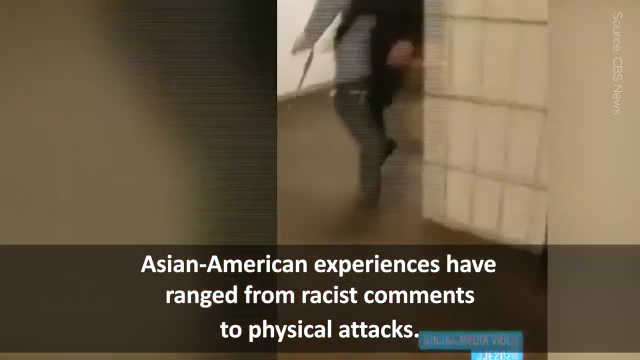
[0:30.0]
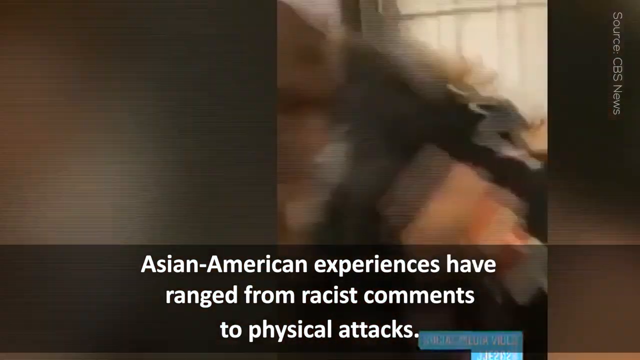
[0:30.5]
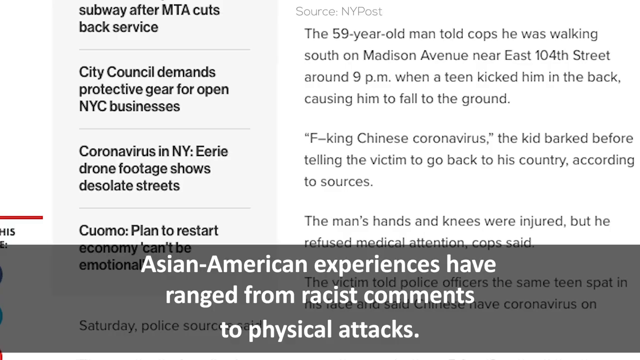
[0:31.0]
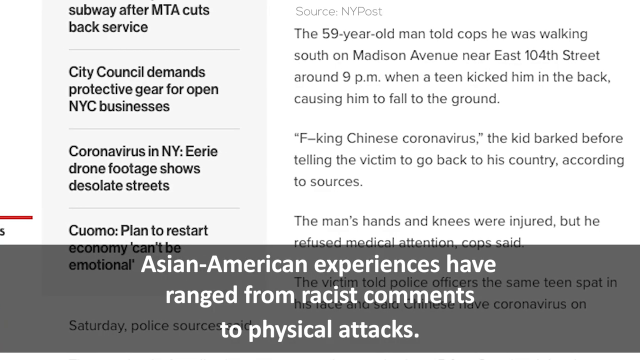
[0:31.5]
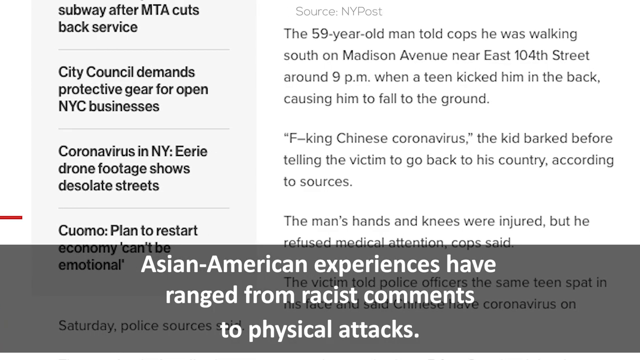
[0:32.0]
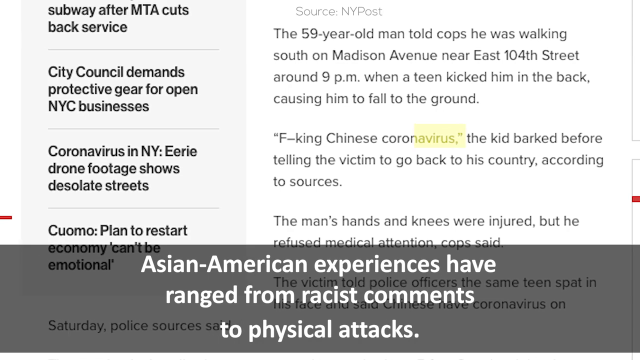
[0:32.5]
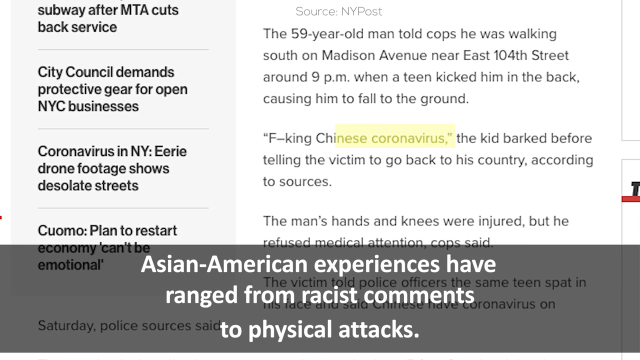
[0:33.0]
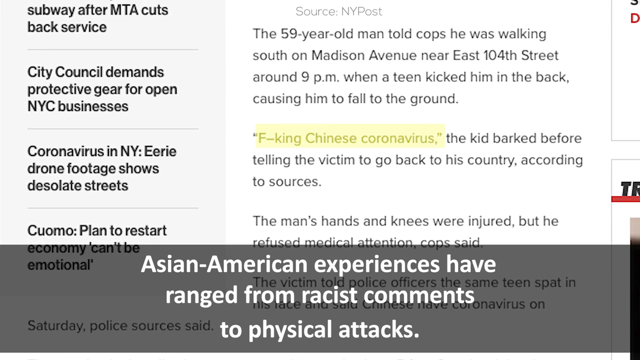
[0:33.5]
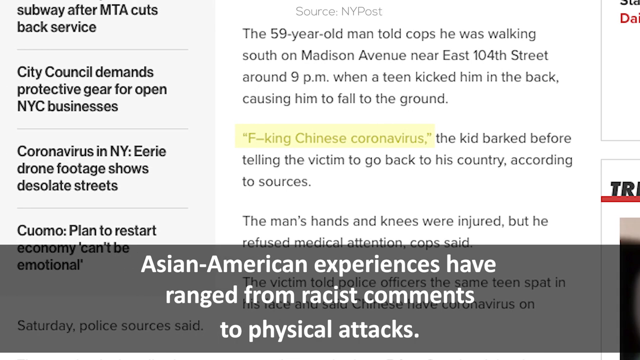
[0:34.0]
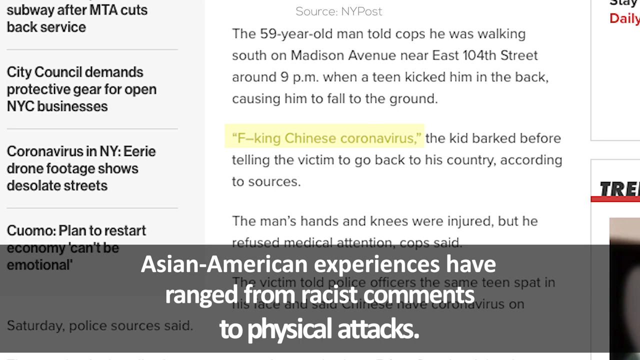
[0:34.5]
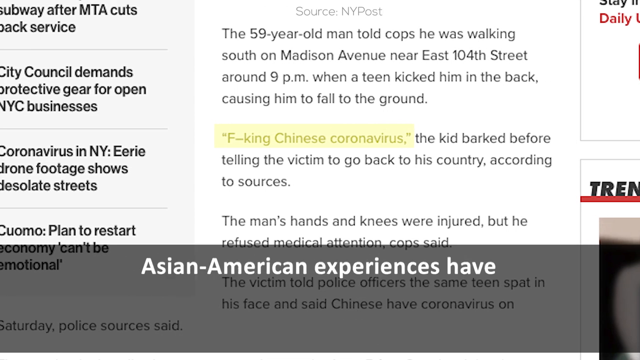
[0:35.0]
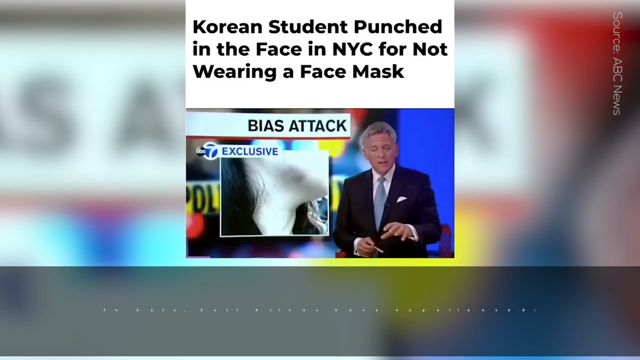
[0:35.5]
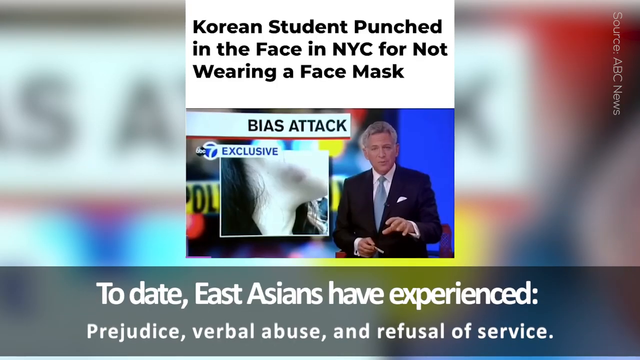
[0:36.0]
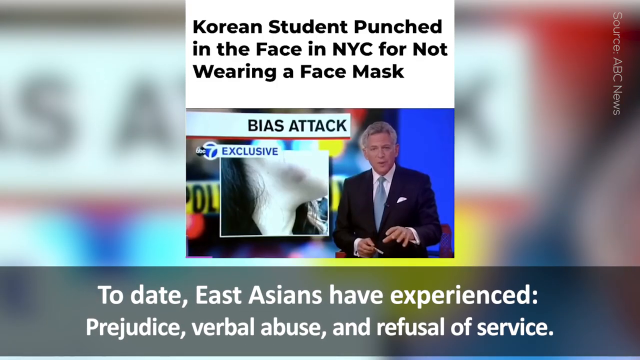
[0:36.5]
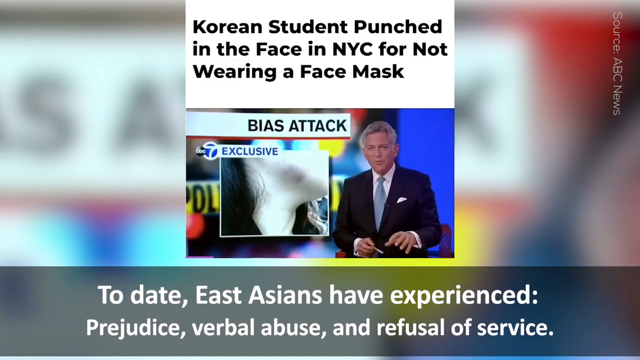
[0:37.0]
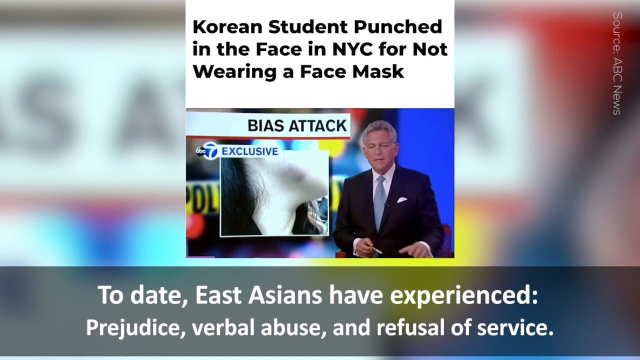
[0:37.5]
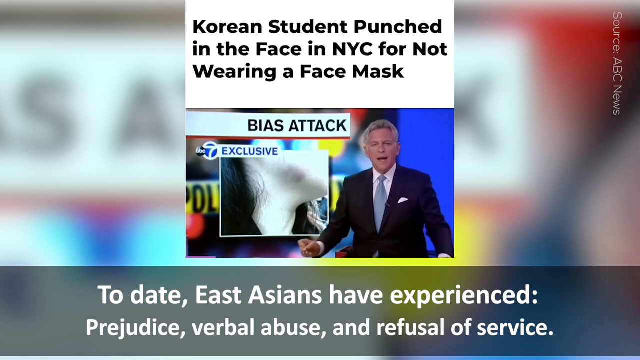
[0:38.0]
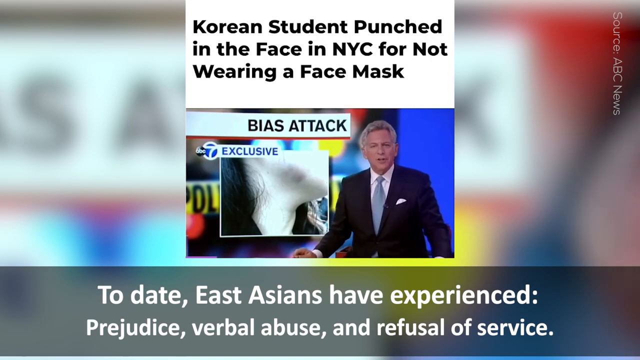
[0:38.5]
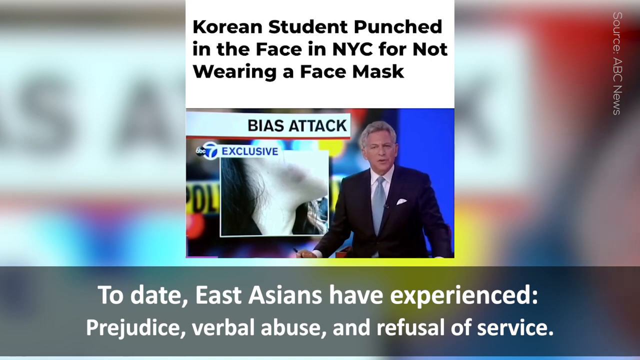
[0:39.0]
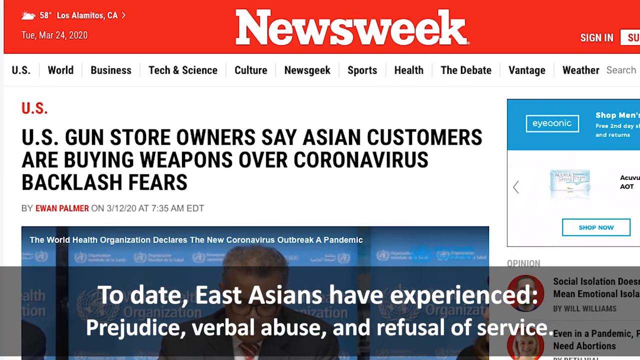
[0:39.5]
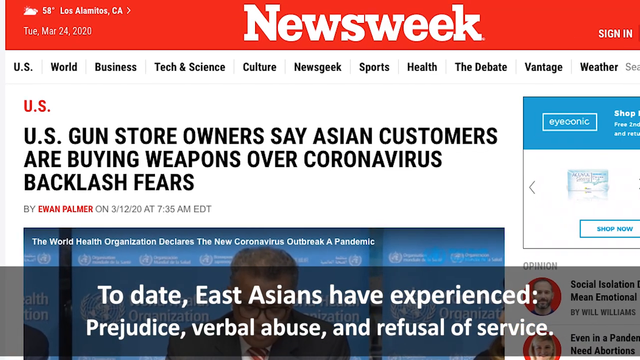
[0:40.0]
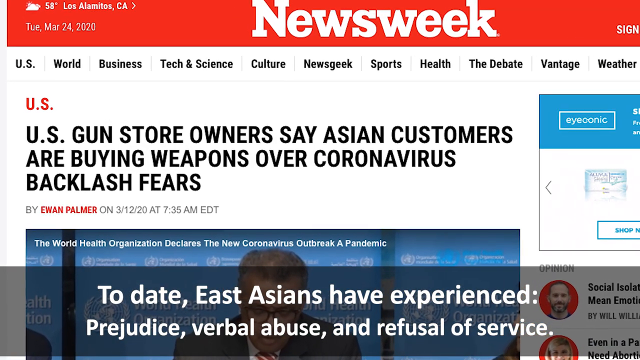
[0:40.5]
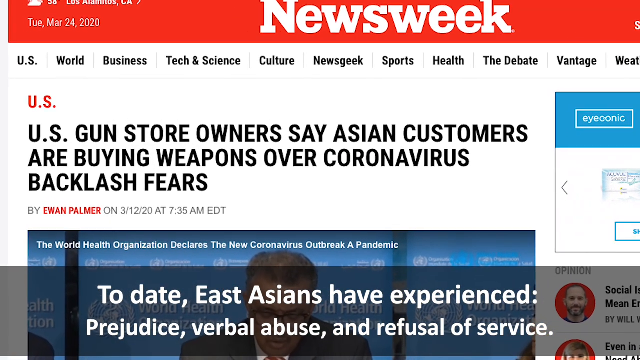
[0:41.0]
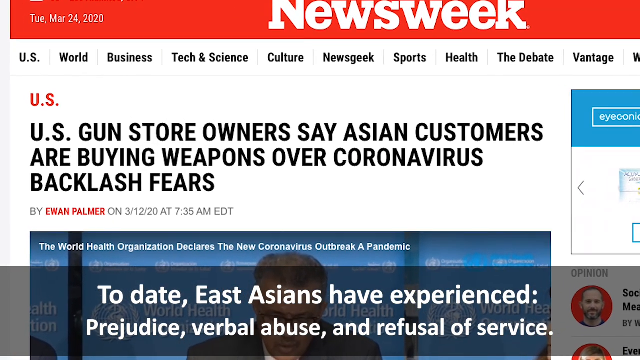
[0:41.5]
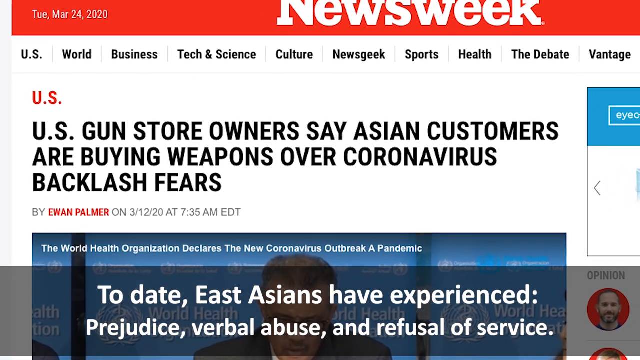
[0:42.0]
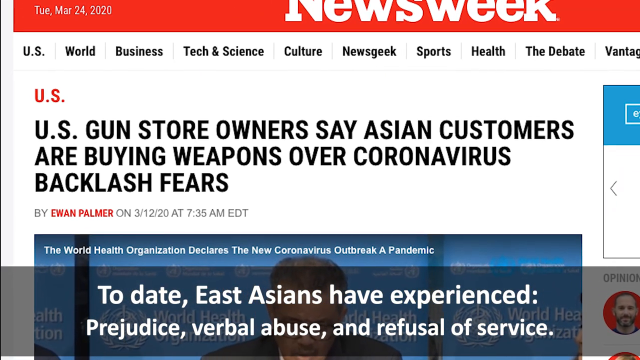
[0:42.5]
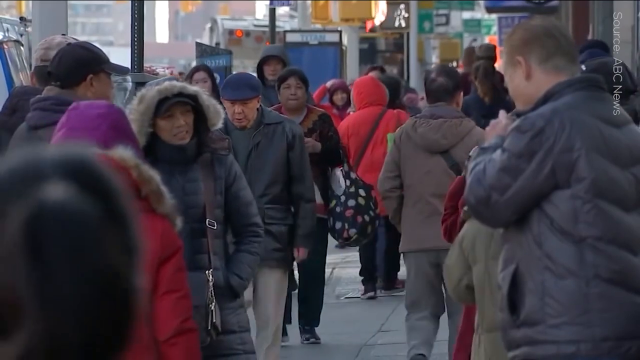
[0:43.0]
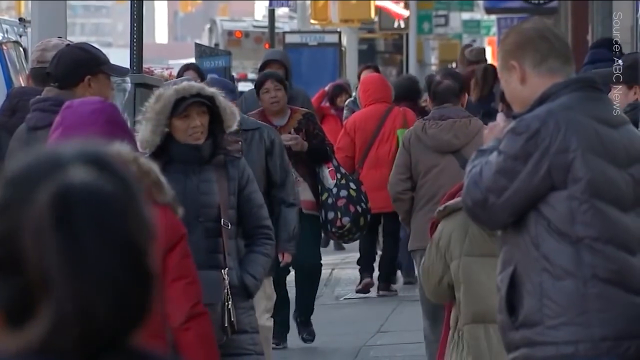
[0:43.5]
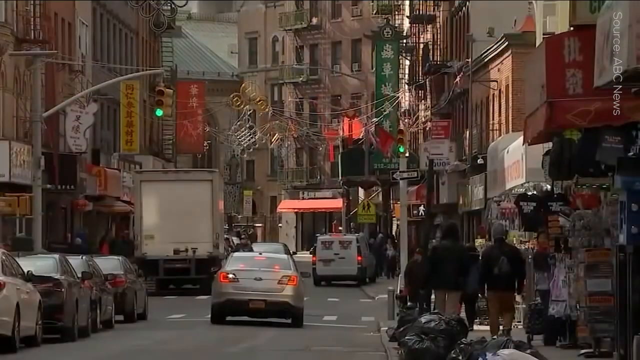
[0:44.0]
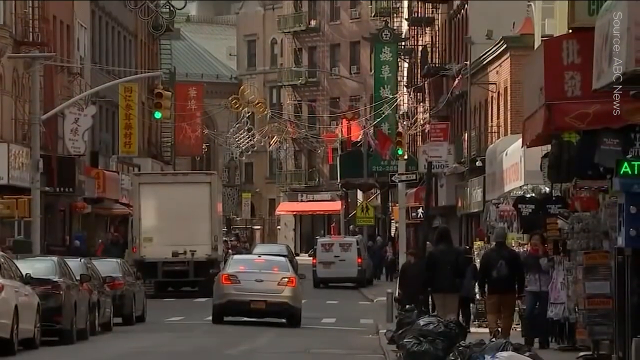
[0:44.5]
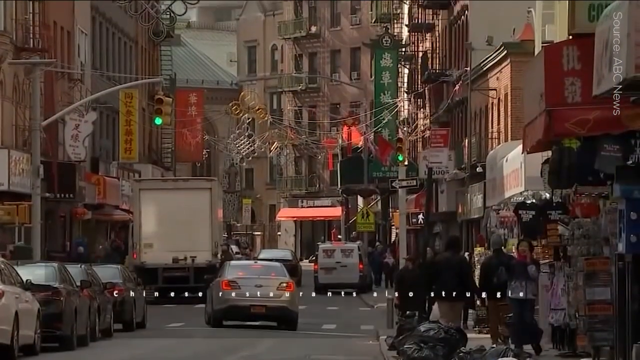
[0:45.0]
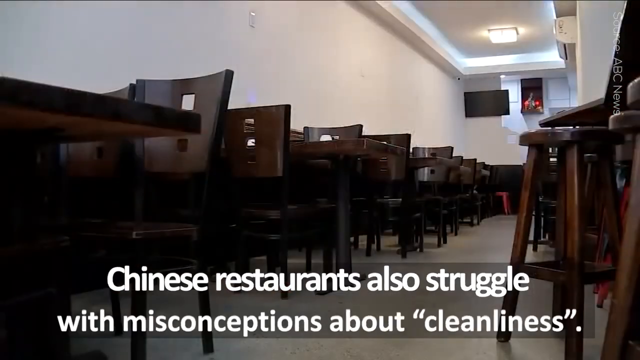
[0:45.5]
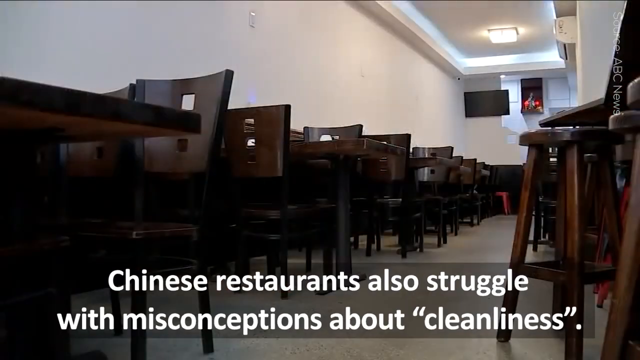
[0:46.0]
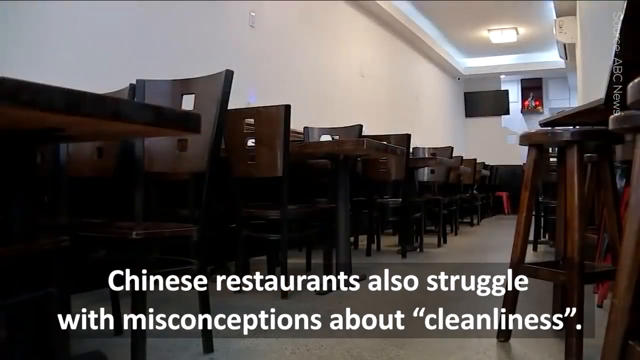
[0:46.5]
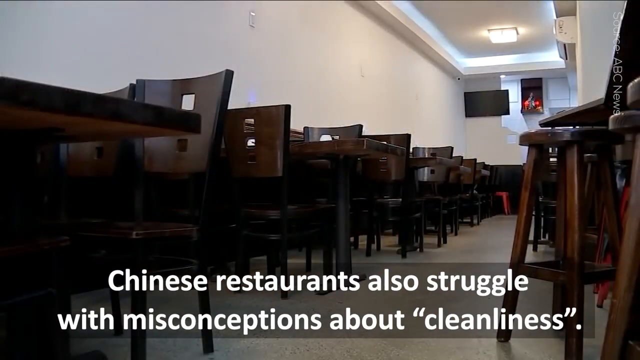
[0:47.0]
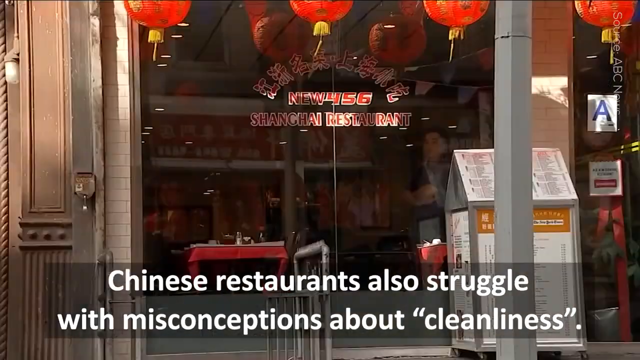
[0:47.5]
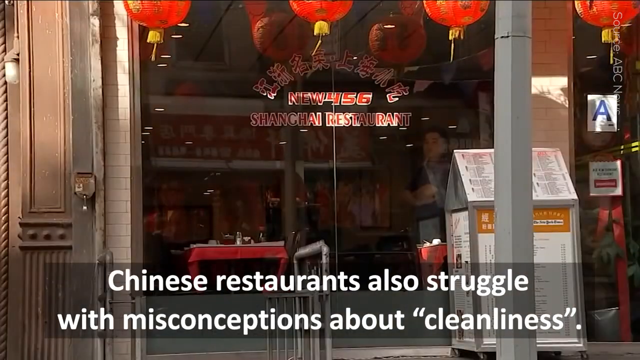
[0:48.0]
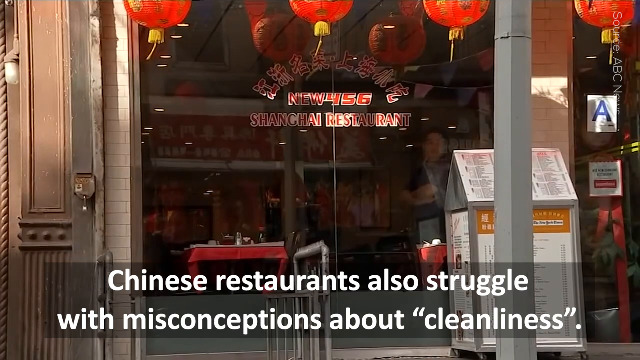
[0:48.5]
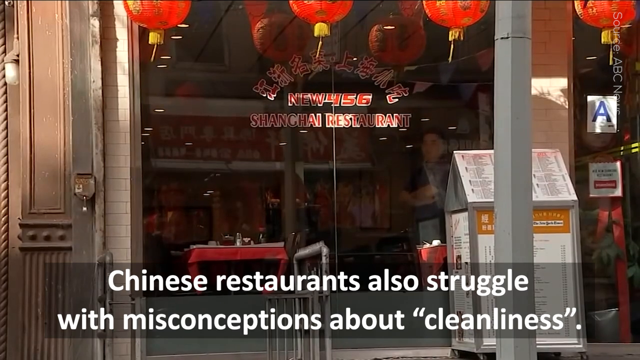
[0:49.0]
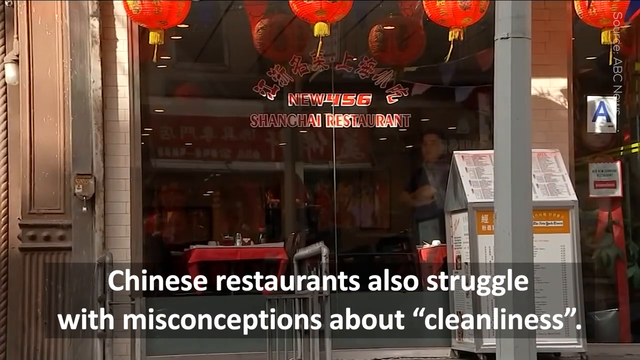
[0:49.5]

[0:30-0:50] Newspaper text states that a 59-year-old man told cops he was walking south on Medicine Avenue near East 104th Street around 9 a.m. when a teen kicked him in the back, causing him to fall to the ground, and that the man's hands and knees were injured but he refused medical attention. More text is written on the newspaper at the back on the left-hand and right-hand sides. Another item shown is about a Korean student who was punched in the face in NYC for not wearing a face mask. Another reads "U.S. gun store owners say Asian customers are buying weapons over coronavirus backlash." Text also states that Asians have experienced prejudice, verbal abuse and attacks, and that Chinese restaurants struggle with misconceptions about cleanliness, and a picture of a Chinese restaurant appears.